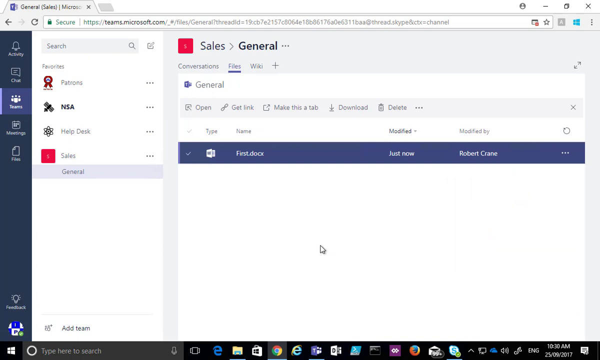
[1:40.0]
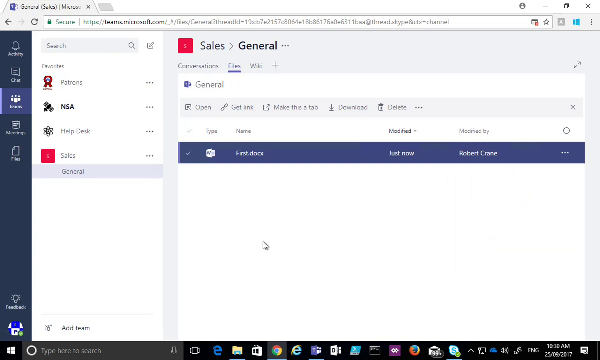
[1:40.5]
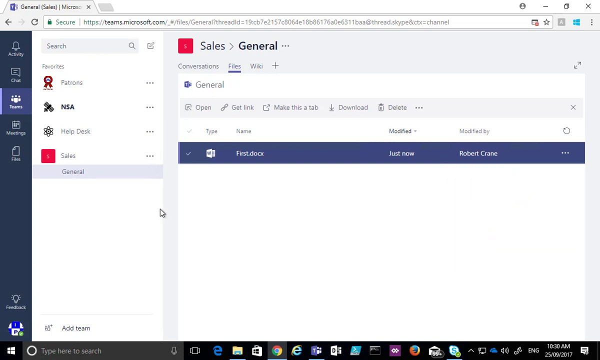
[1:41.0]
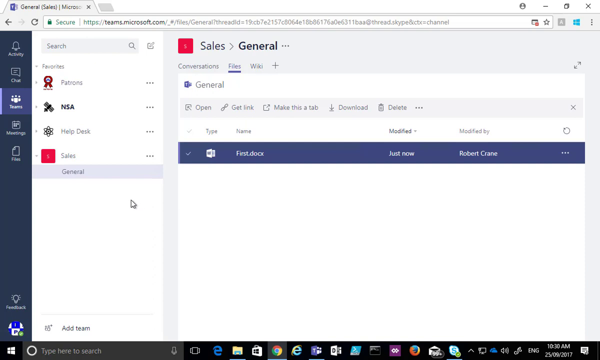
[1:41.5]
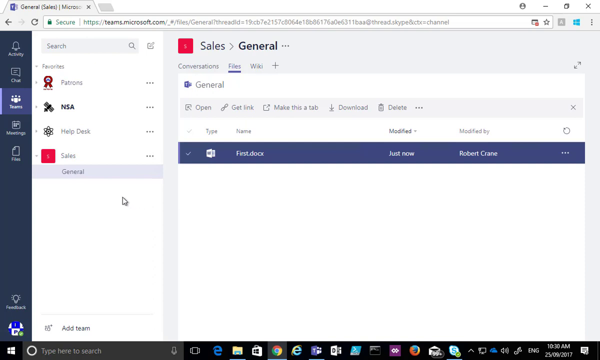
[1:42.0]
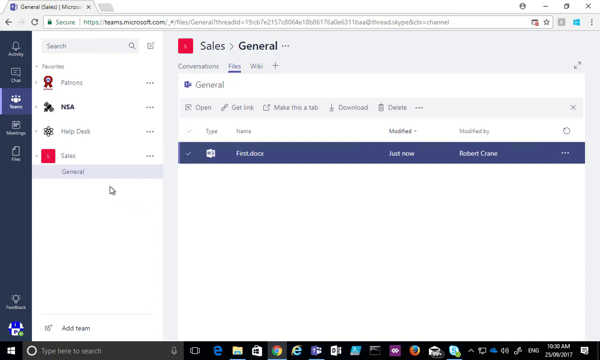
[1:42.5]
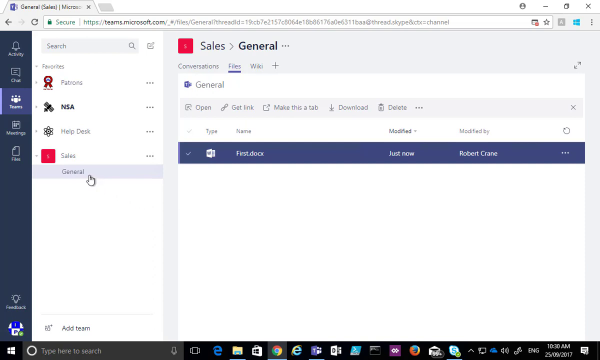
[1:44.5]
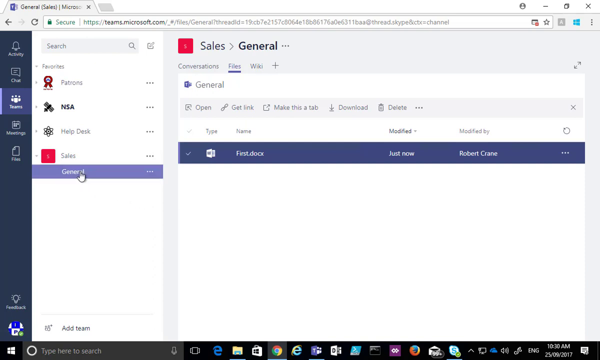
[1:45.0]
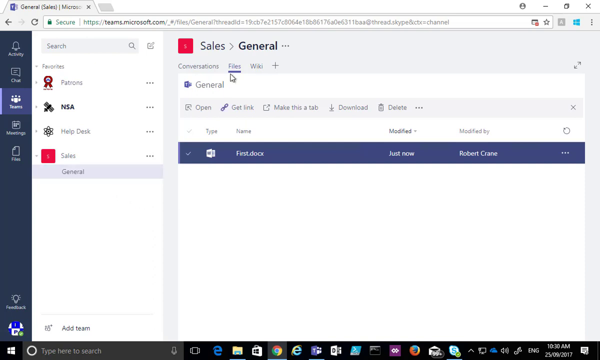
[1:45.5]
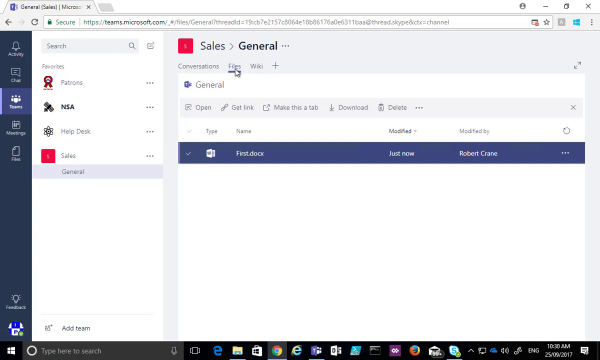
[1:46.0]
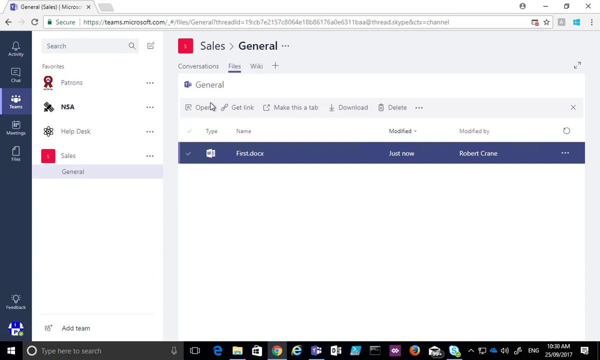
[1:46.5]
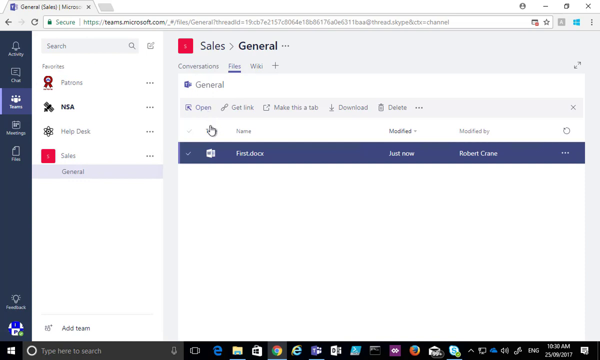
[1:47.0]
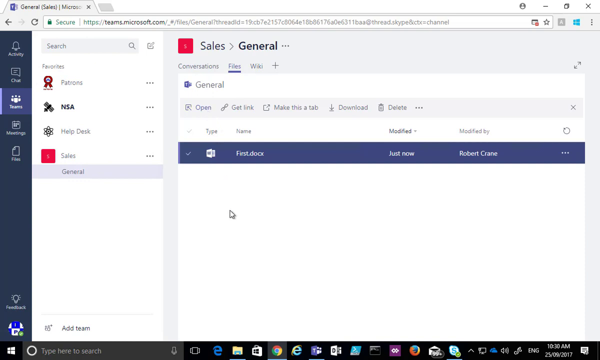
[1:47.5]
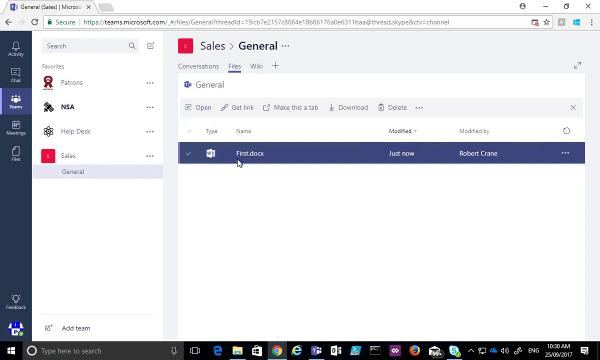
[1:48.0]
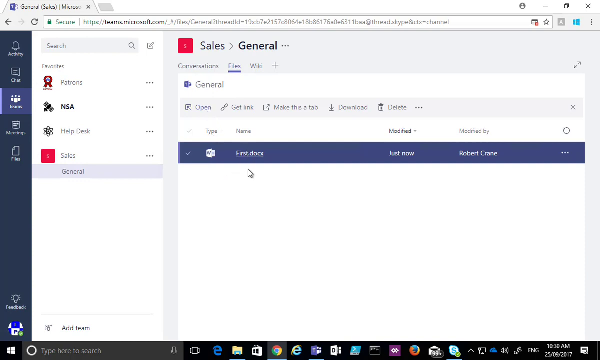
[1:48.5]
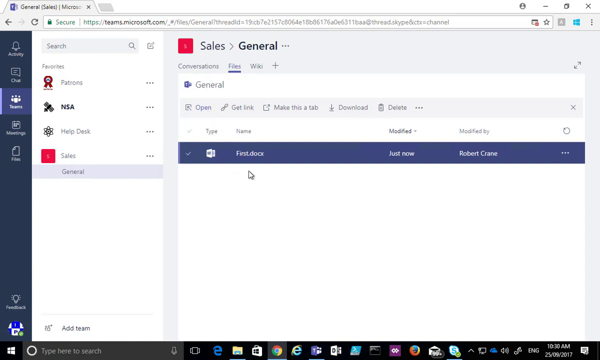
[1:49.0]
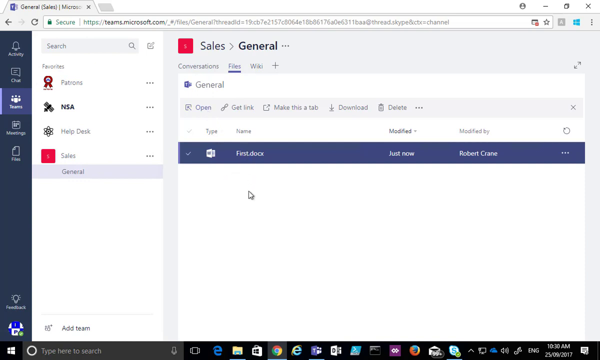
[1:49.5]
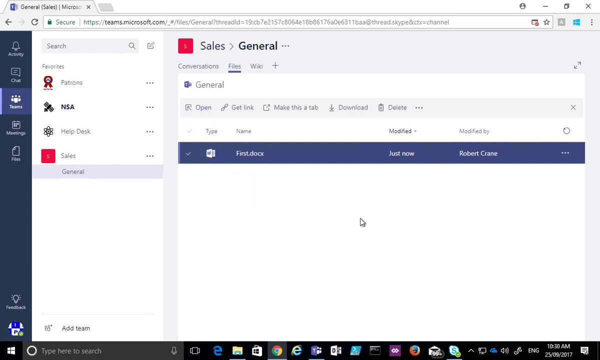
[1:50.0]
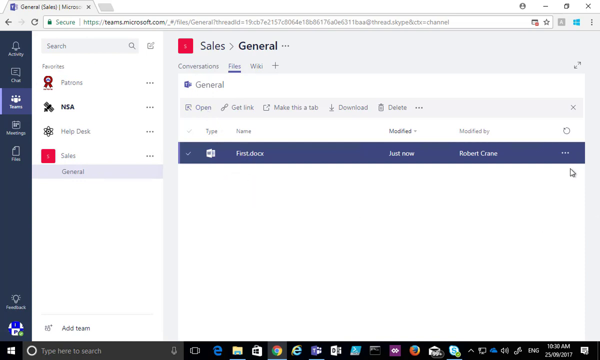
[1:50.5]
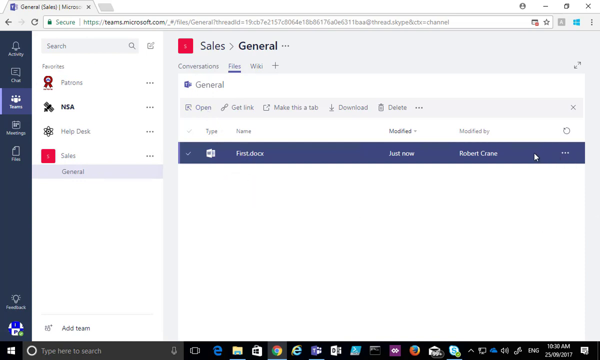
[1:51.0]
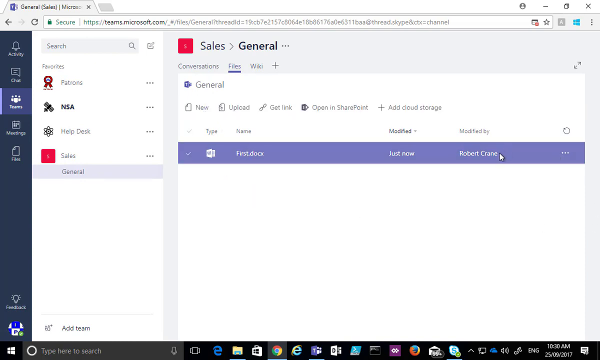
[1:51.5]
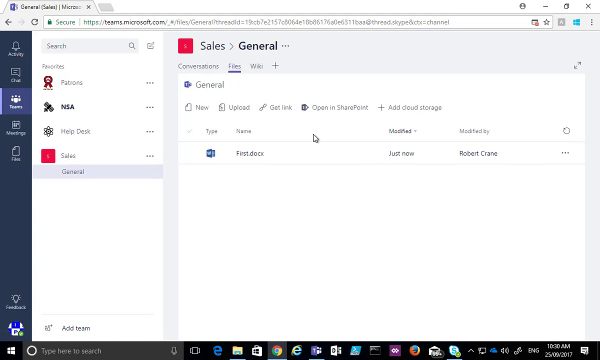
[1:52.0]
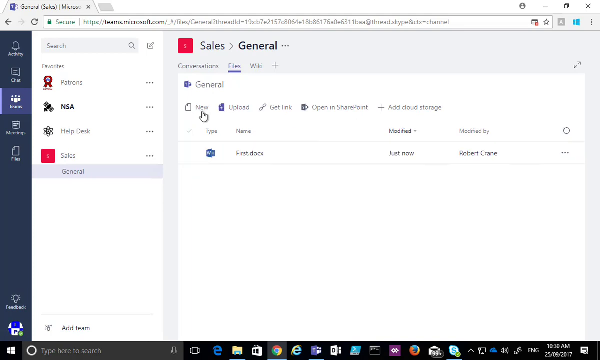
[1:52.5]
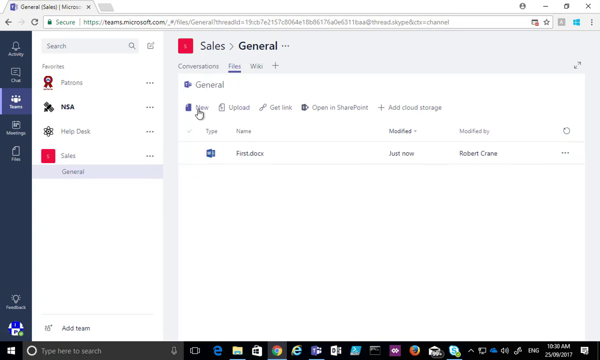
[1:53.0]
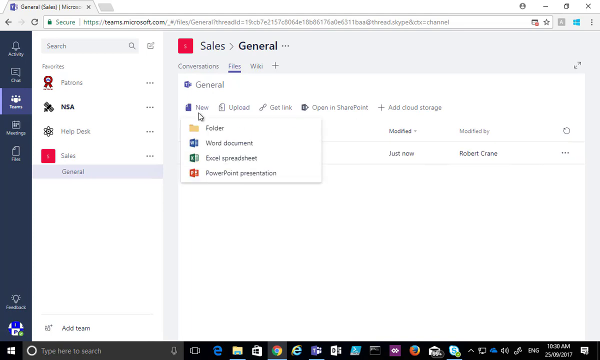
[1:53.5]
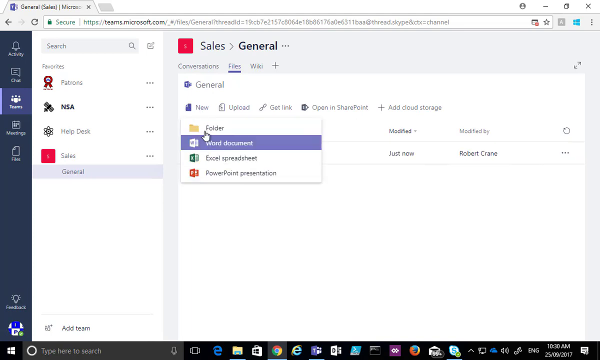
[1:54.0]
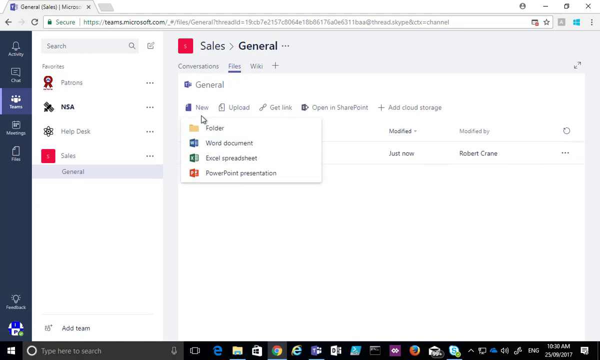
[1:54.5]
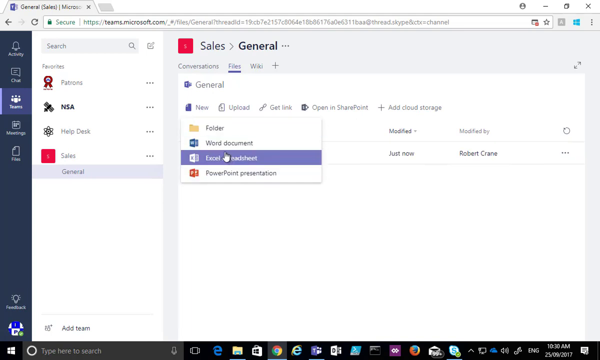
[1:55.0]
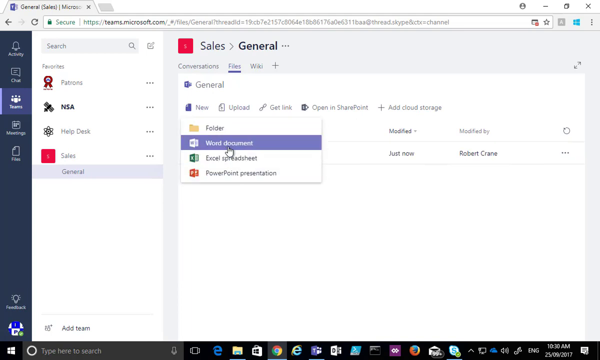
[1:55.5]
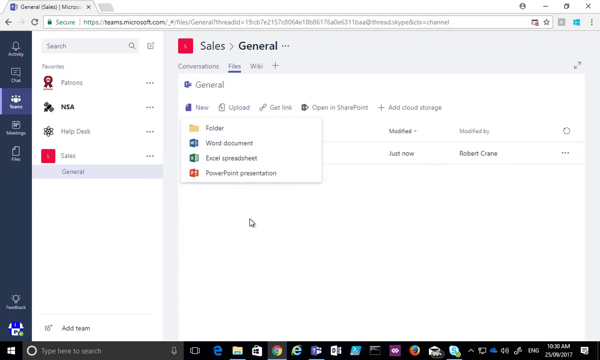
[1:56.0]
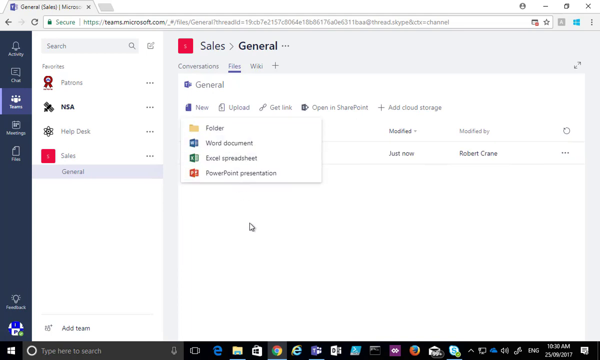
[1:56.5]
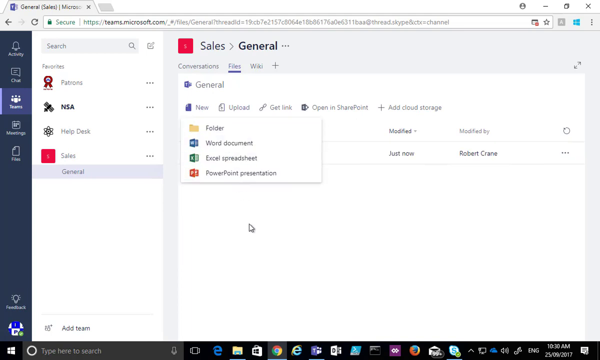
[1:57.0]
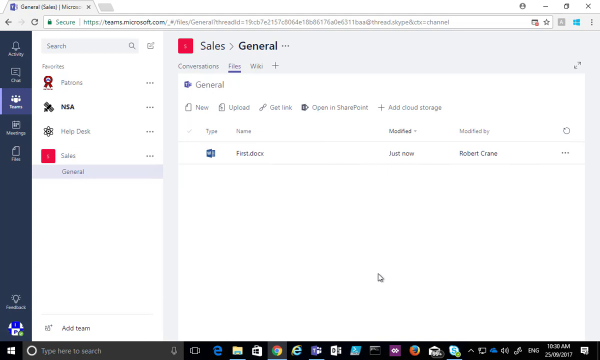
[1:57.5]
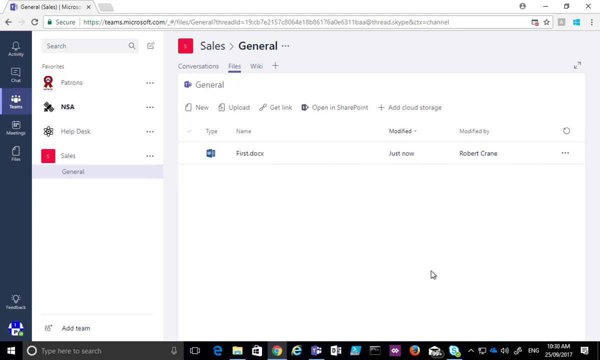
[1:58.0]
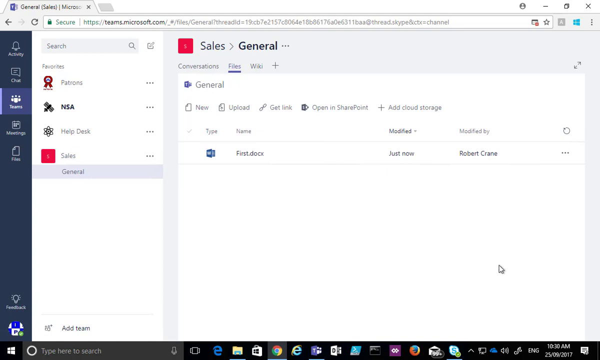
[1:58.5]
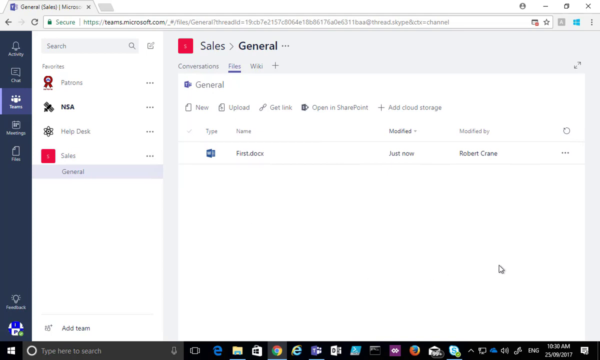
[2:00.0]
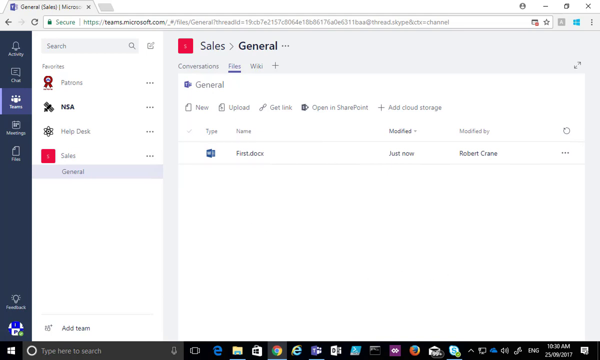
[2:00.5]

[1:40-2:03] The General tab for Sales is shown with "first.docx" listed. The General files are opened, and New is selected, bringing up "Folder," "Word document," "Excel spreadsheet" and "PowerPoint presentation."